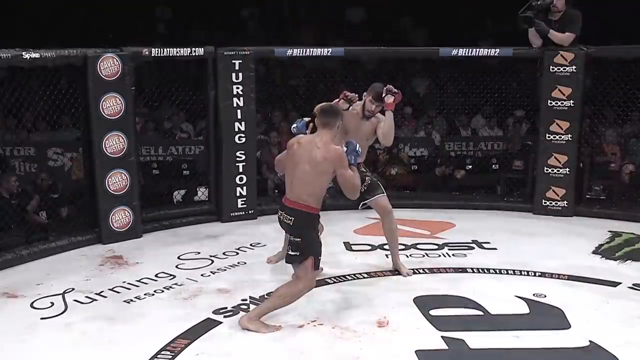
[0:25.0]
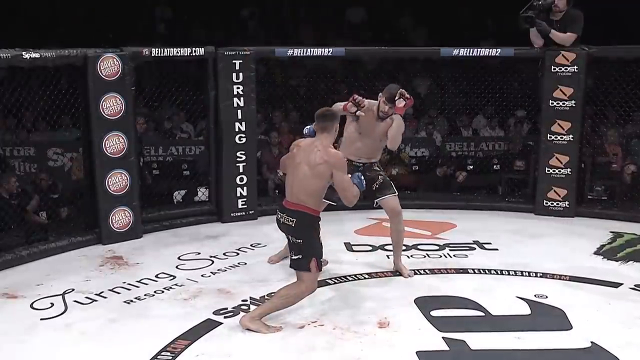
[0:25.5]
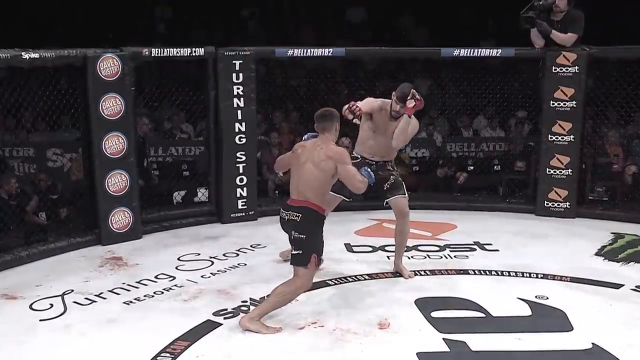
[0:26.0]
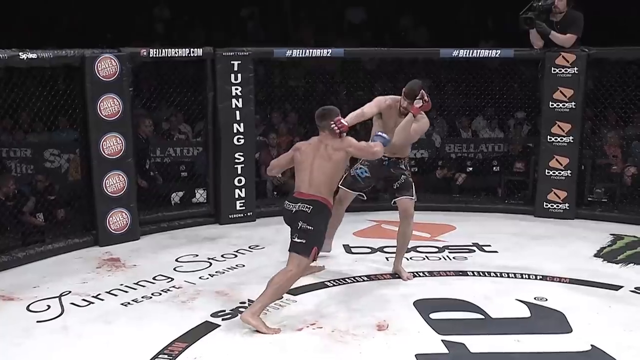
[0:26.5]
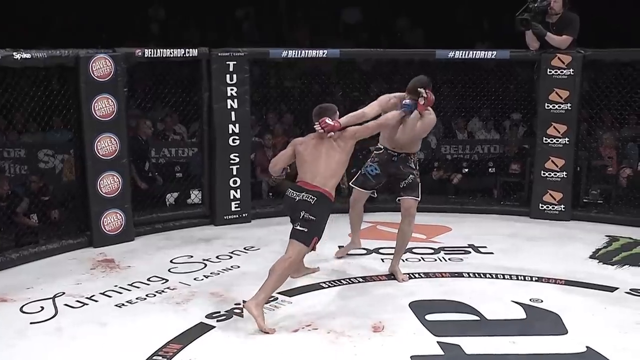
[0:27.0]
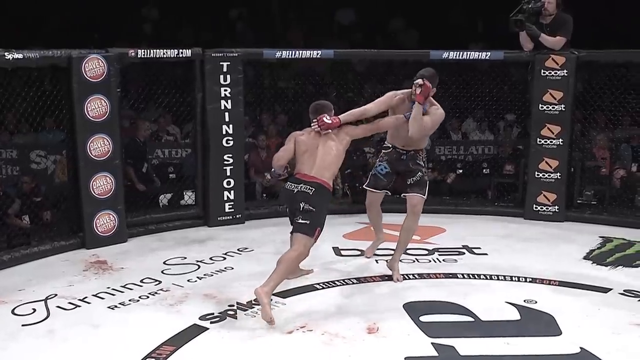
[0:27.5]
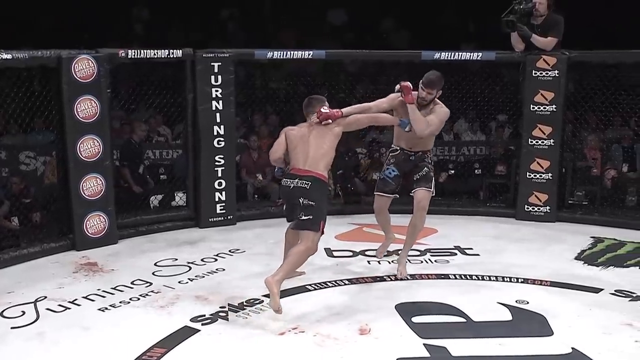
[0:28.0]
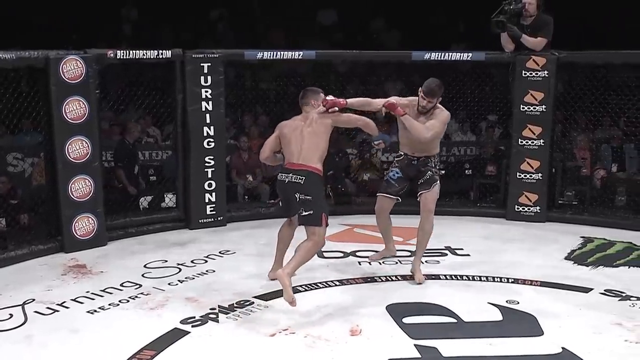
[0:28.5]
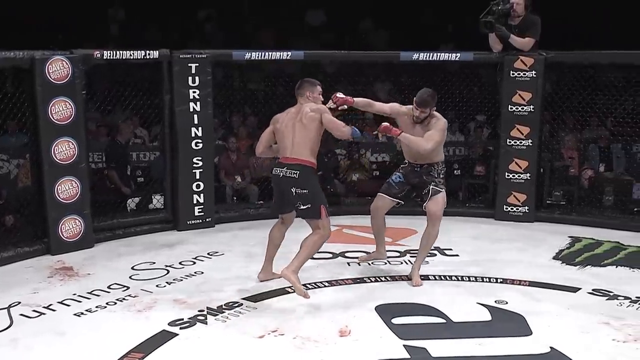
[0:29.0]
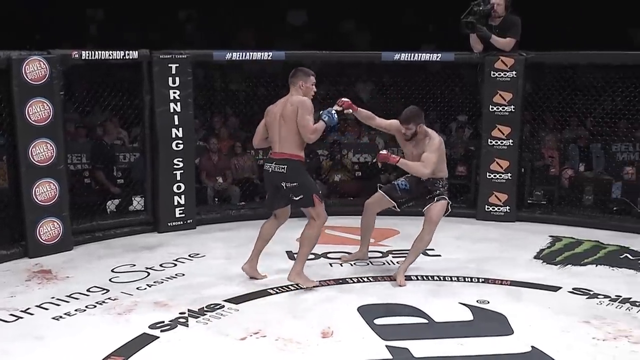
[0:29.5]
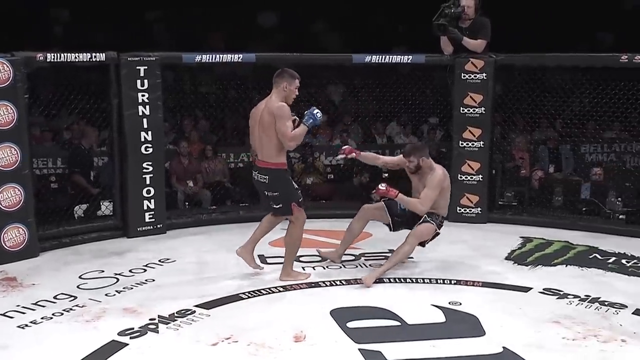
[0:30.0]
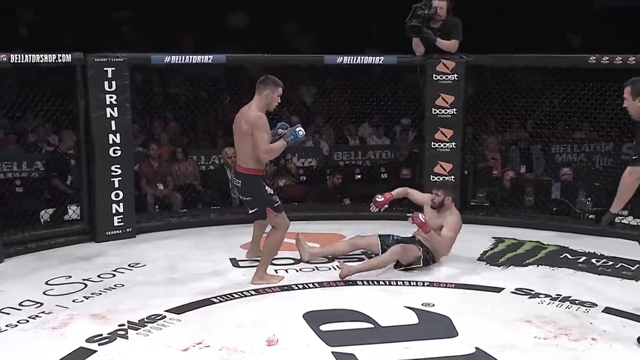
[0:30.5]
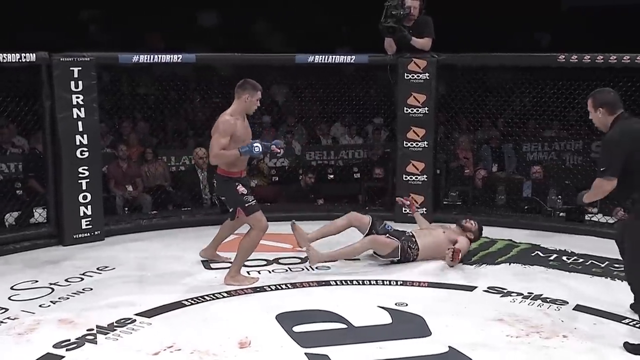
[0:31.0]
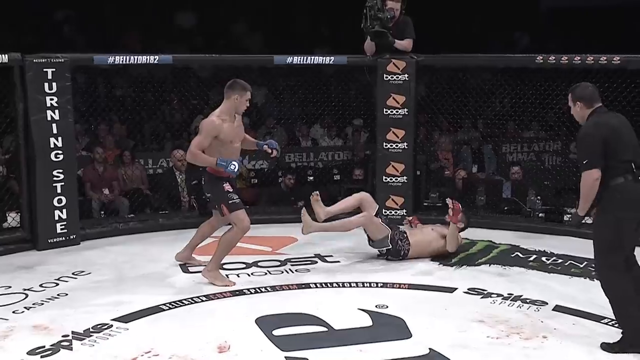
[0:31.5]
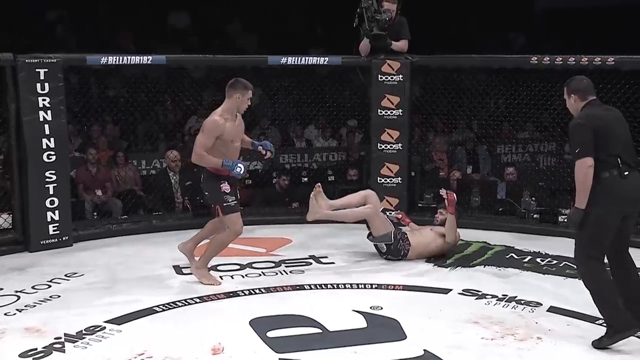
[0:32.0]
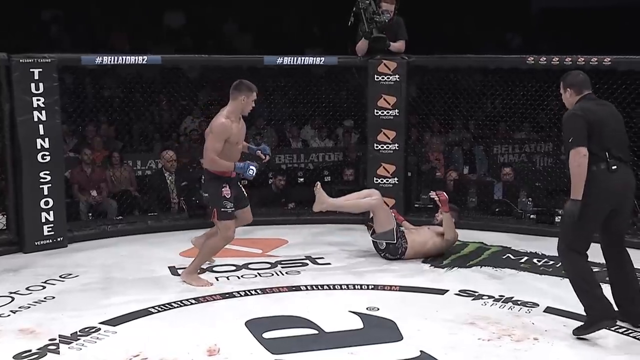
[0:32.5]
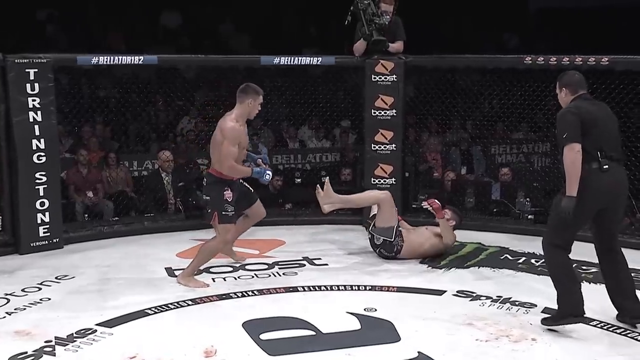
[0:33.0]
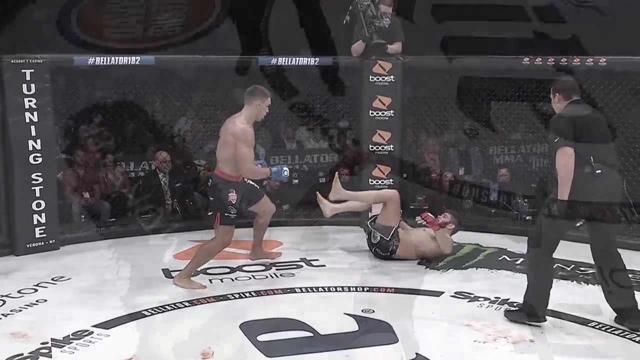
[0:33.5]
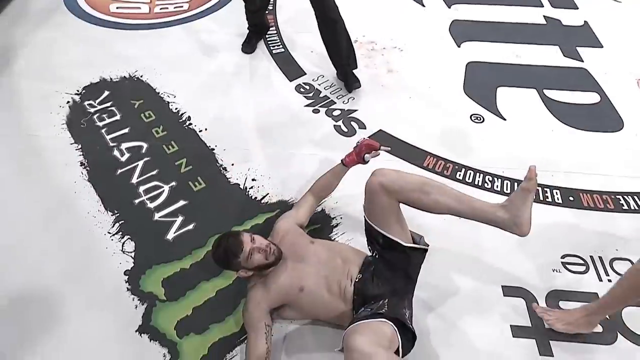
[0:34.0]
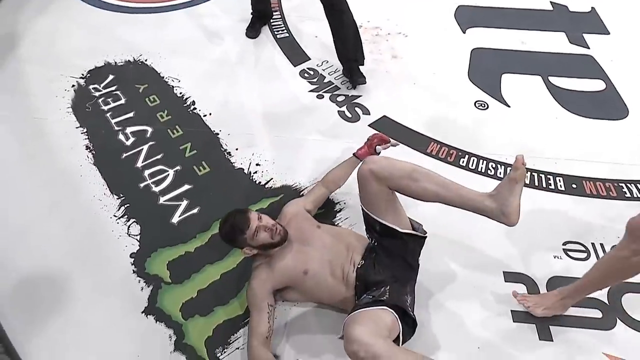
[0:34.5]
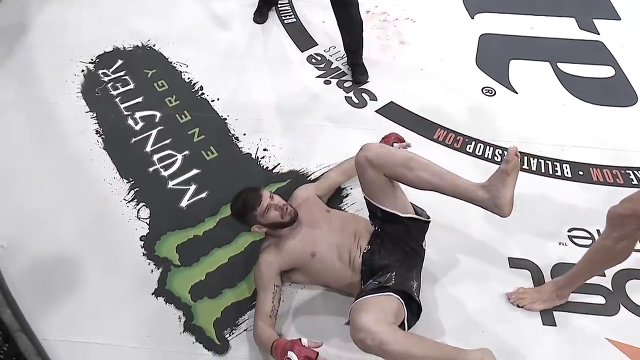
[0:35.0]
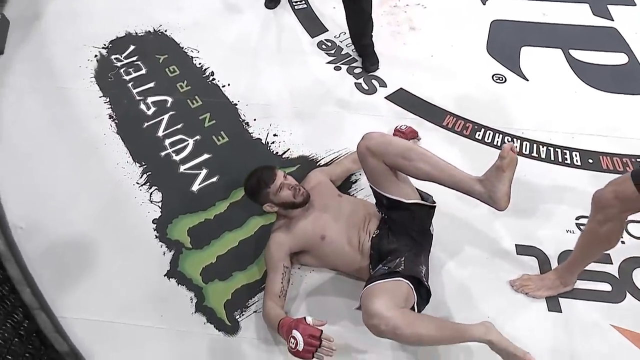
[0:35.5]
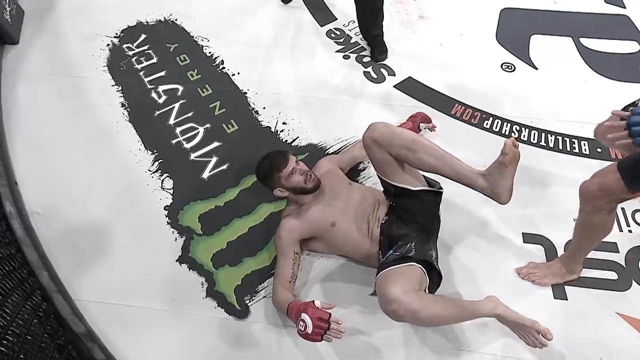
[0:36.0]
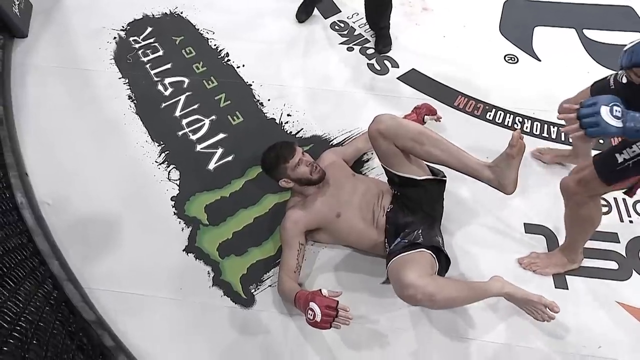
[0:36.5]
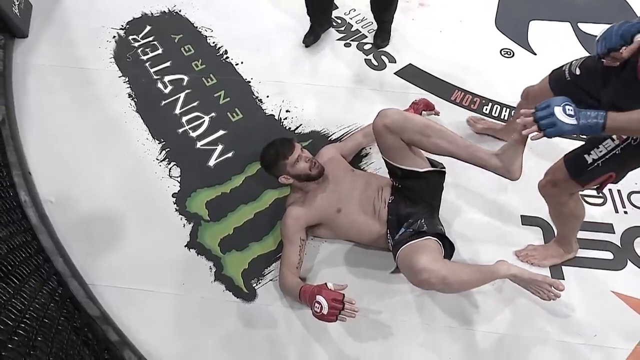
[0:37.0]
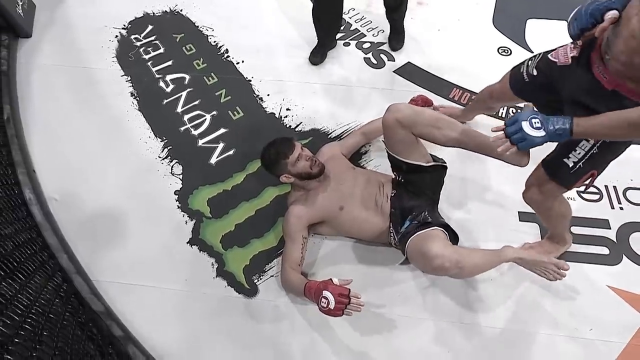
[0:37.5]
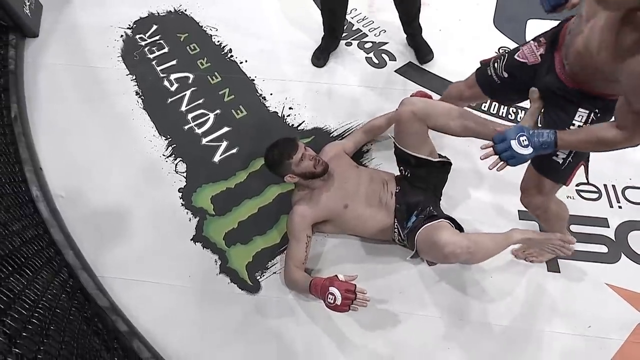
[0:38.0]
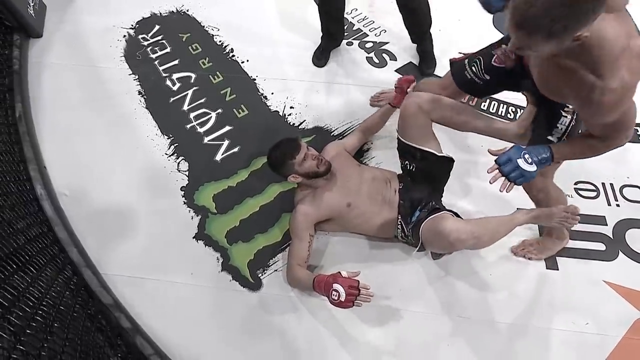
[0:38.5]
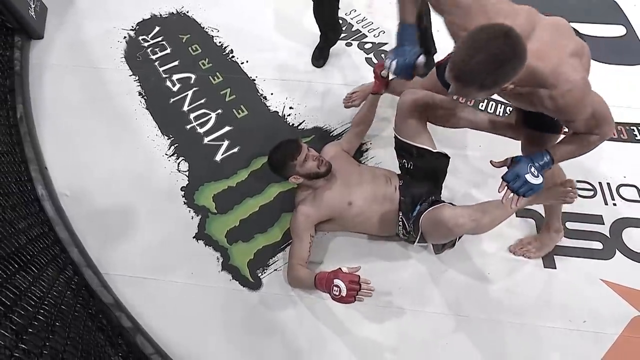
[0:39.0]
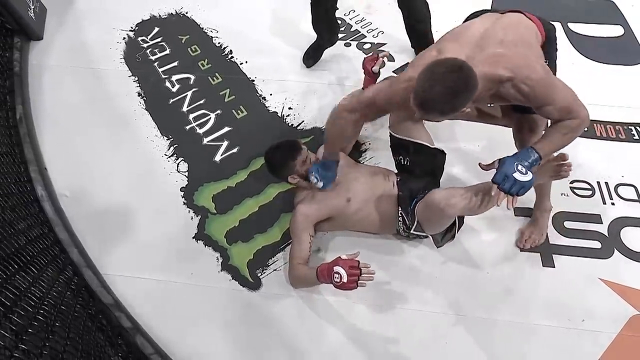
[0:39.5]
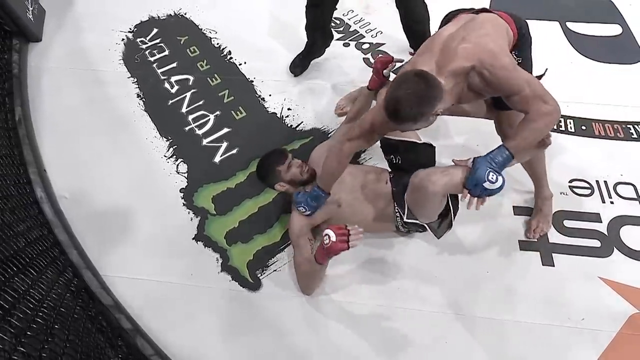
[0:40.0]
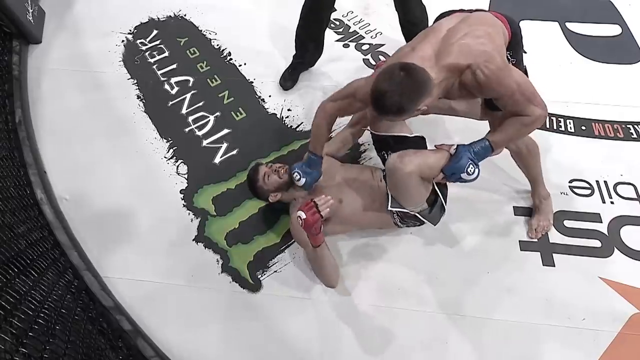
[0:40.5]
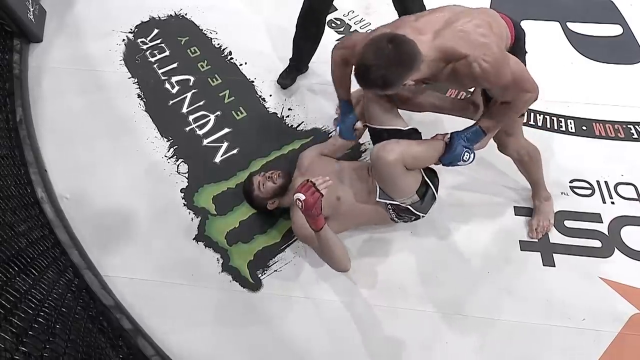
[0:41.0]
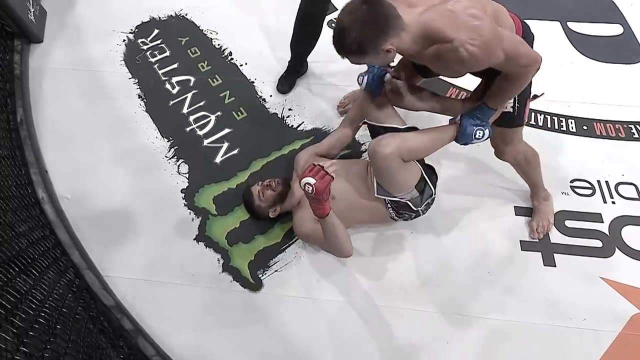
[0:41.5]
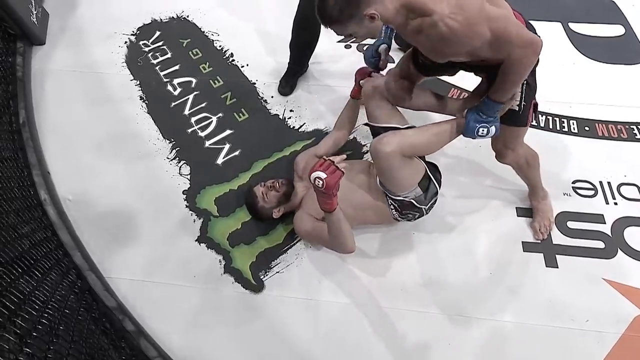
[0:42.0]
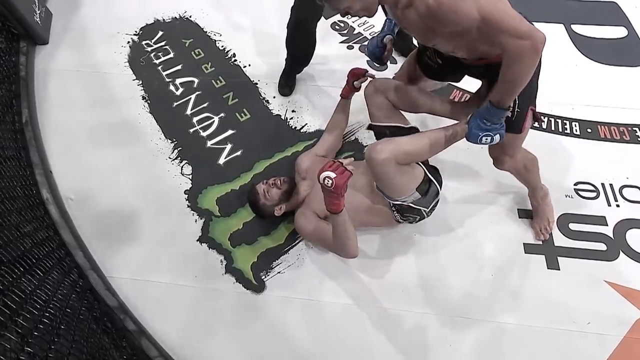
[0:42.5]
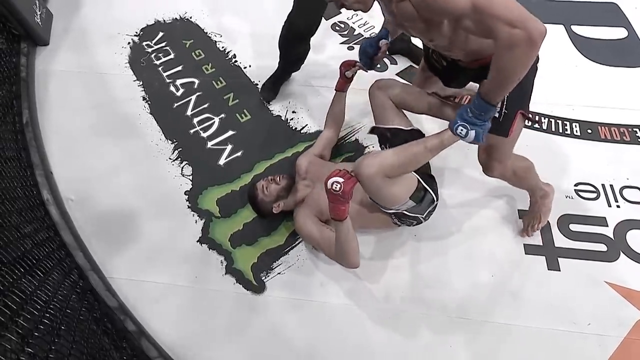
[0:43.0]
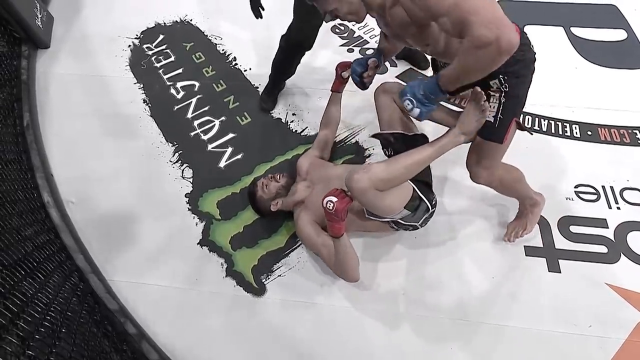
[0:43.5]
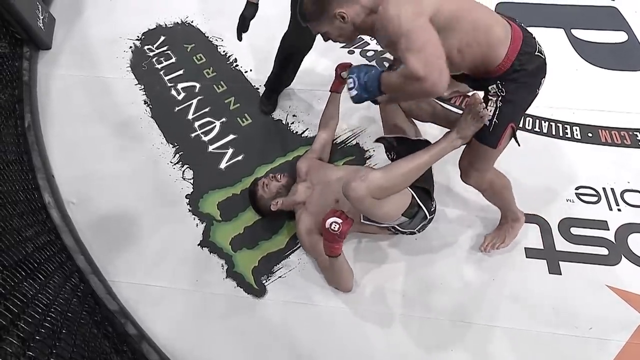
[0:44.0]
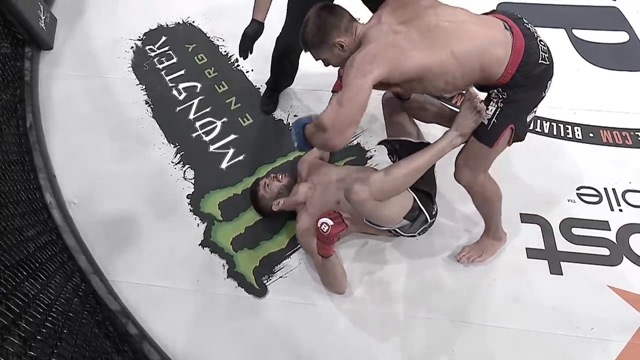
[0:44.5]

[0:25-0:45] A very slow-motion replay shows Linz getting hit in the face by a right straight and falling over, then trying to put his feet up to defend himself. Nemkov comes in and strikes him in the nose, apparently hitting him hard, possibly breaking his nose, and then throws a left across the face that only seems to glance him. Linz is on his back, unable to defend himself, and the fight ends very quickly after one or two short kicks, one straight and two ground strikes.